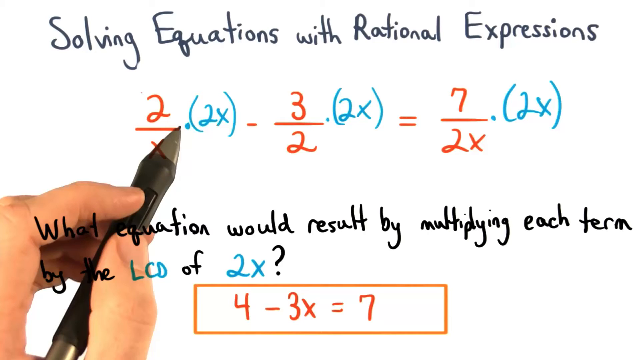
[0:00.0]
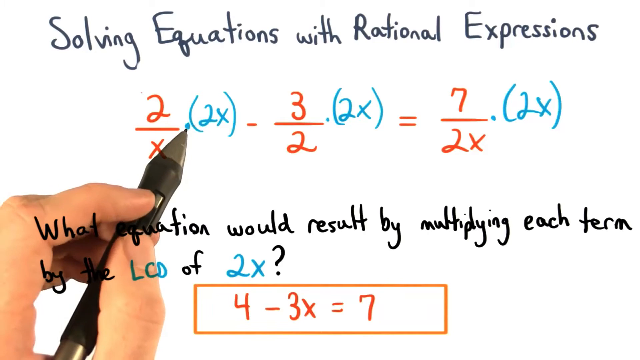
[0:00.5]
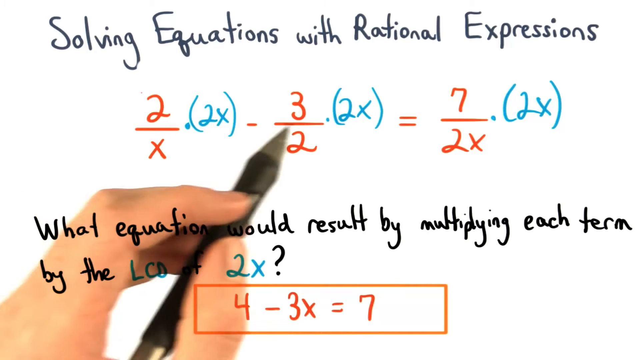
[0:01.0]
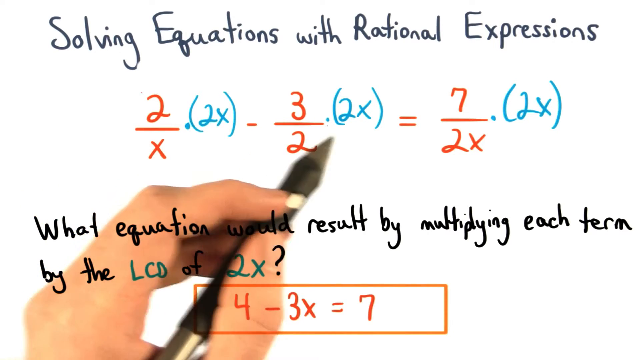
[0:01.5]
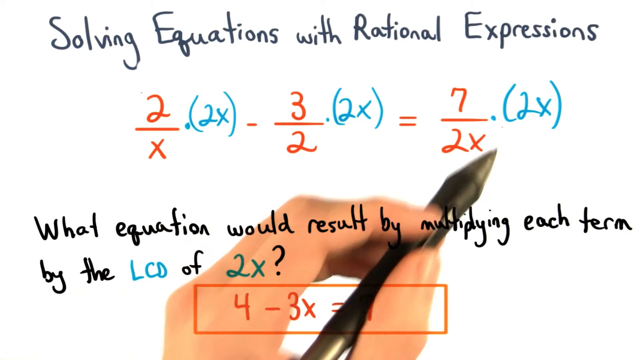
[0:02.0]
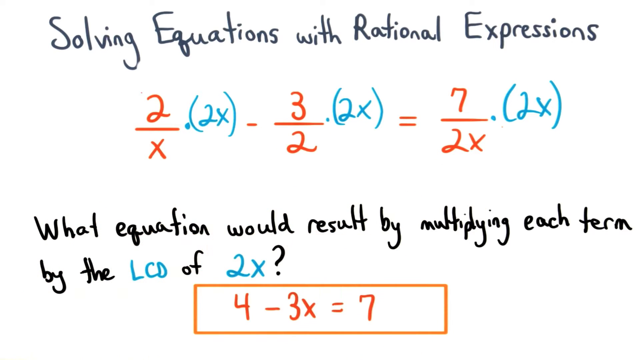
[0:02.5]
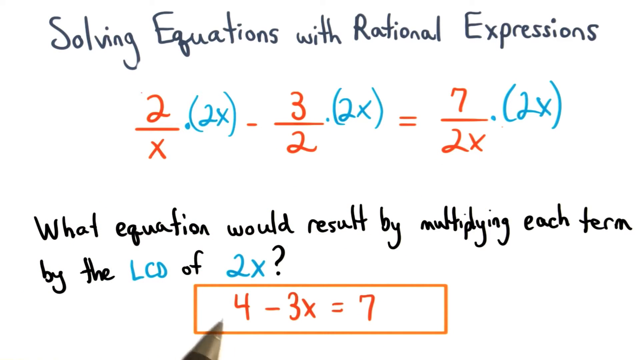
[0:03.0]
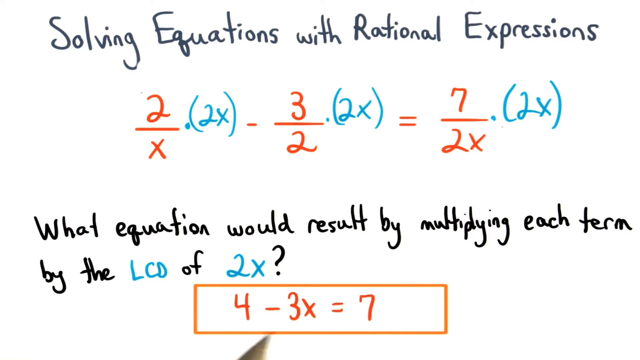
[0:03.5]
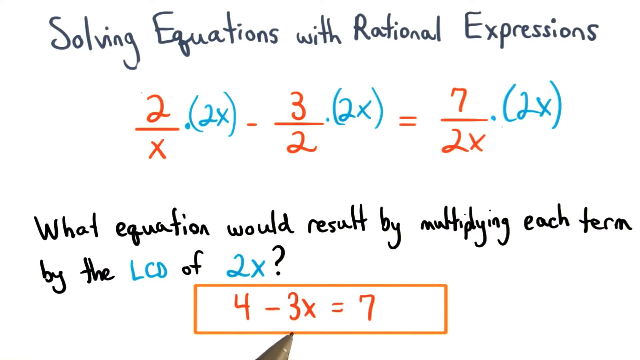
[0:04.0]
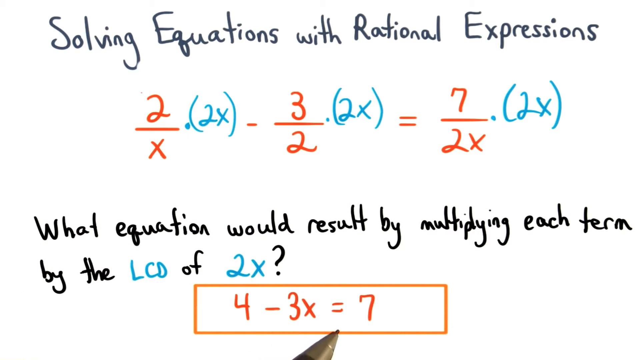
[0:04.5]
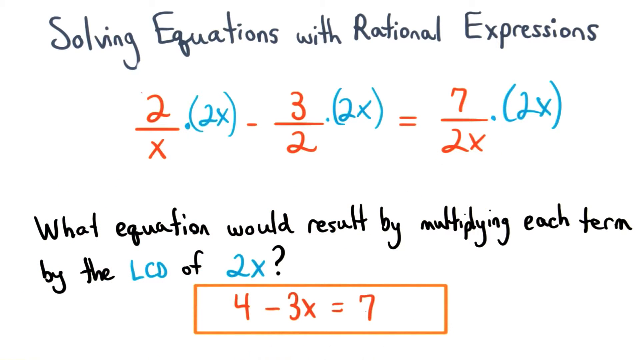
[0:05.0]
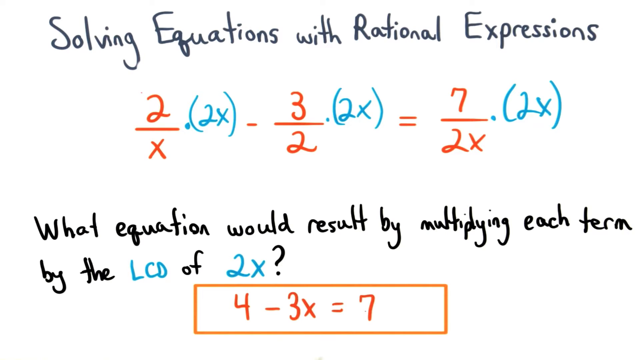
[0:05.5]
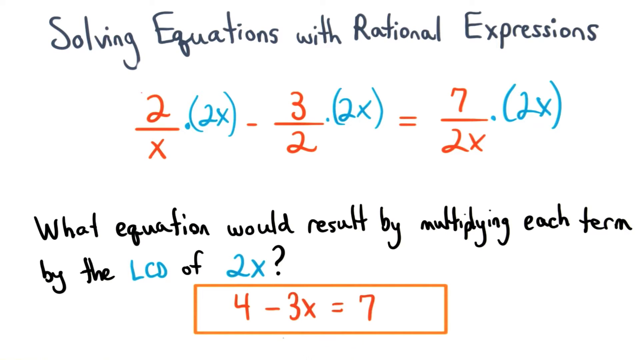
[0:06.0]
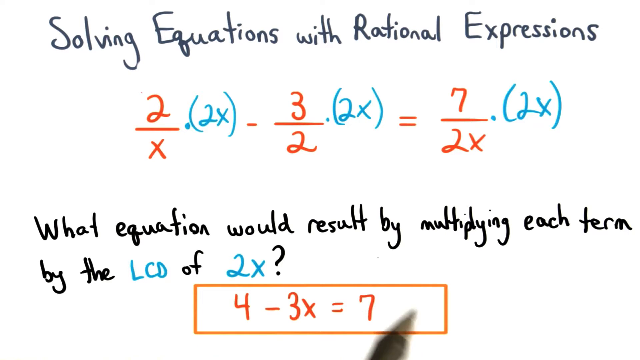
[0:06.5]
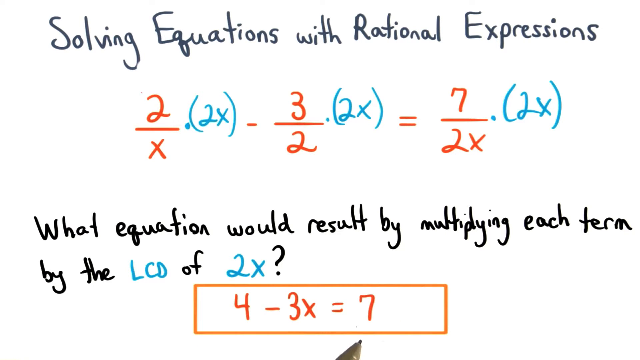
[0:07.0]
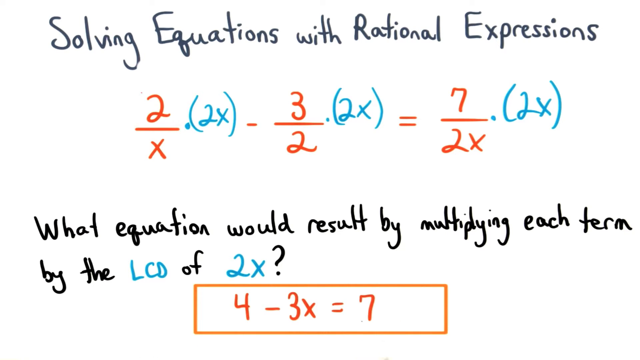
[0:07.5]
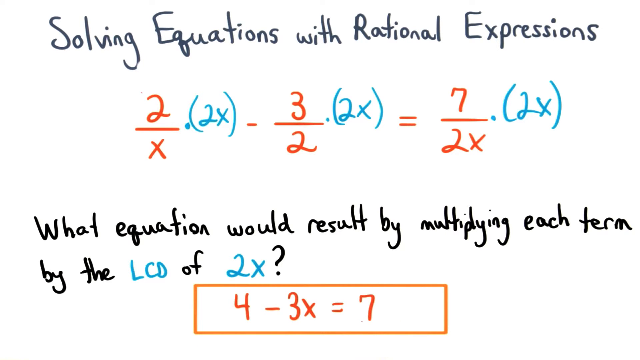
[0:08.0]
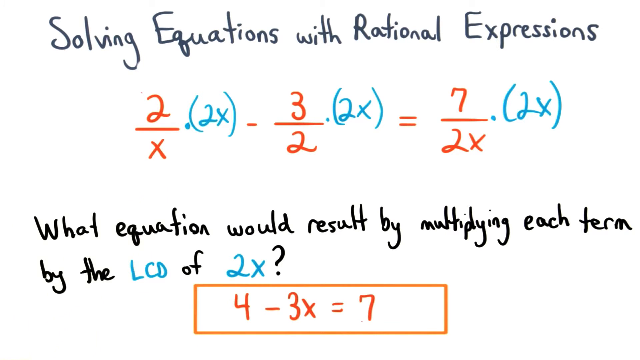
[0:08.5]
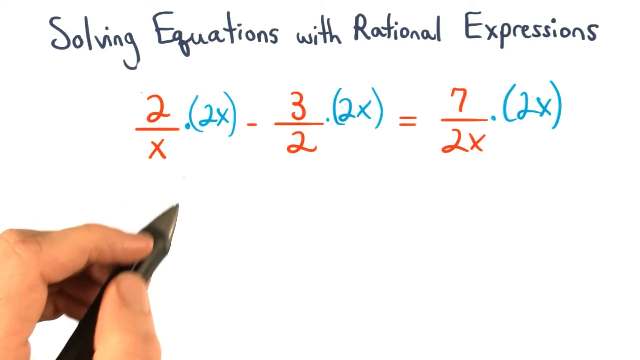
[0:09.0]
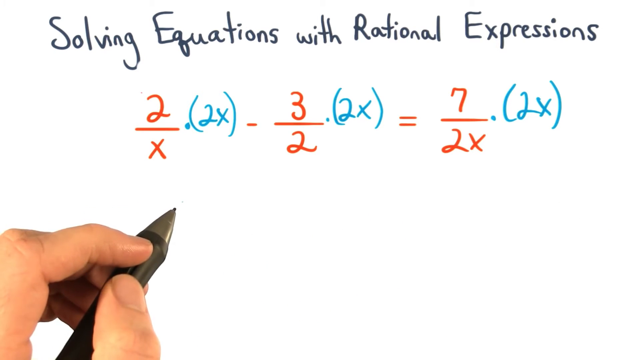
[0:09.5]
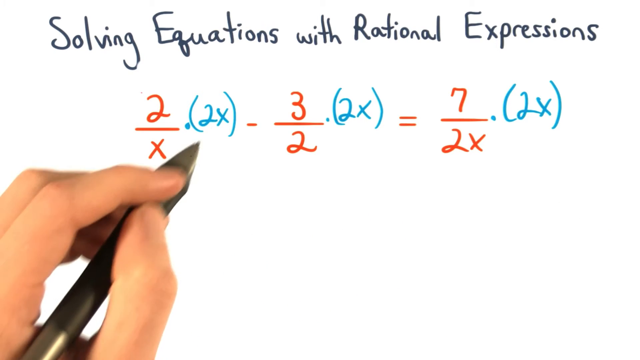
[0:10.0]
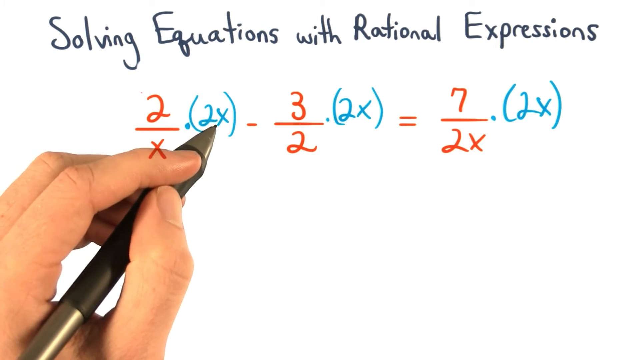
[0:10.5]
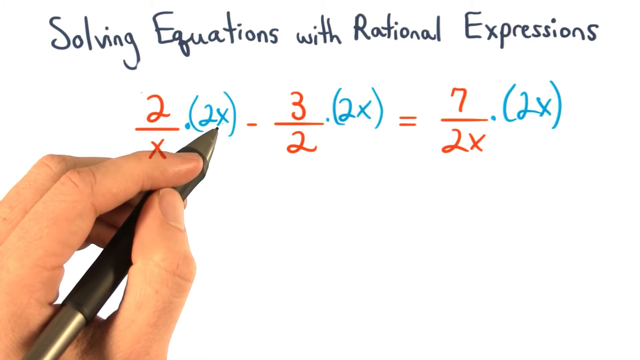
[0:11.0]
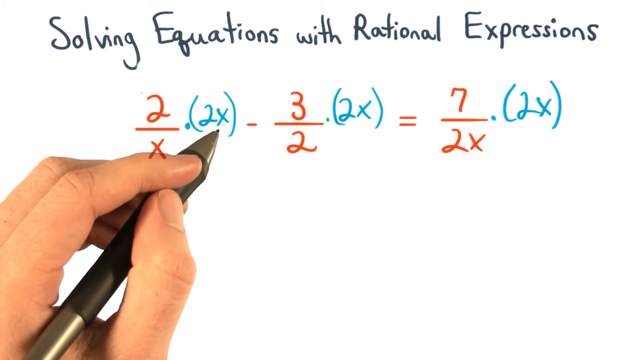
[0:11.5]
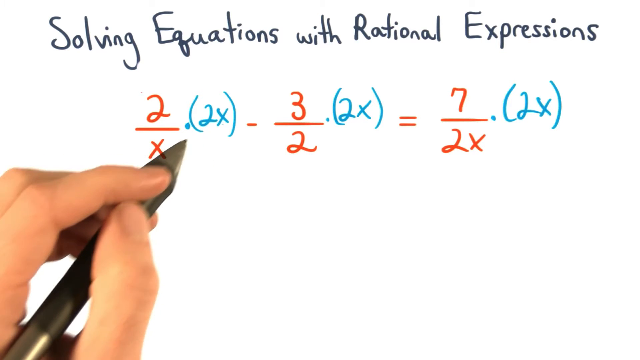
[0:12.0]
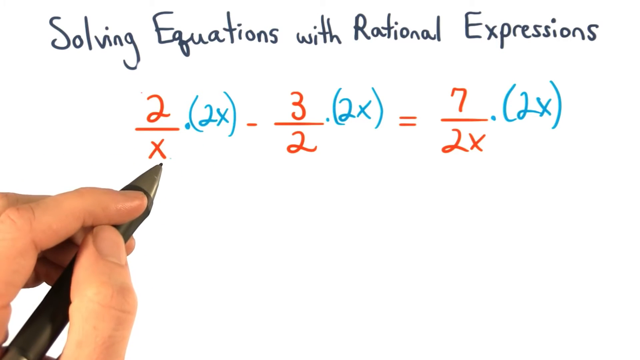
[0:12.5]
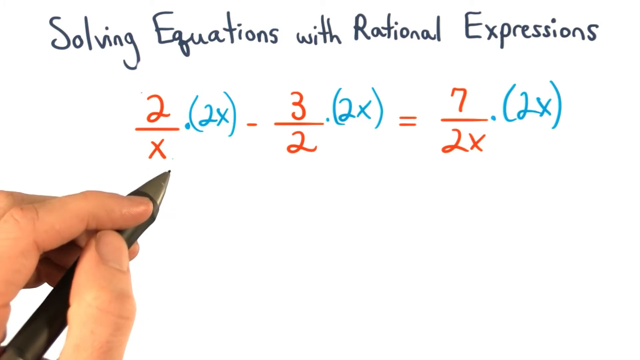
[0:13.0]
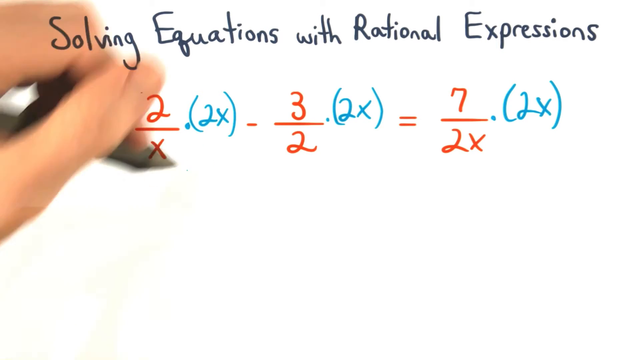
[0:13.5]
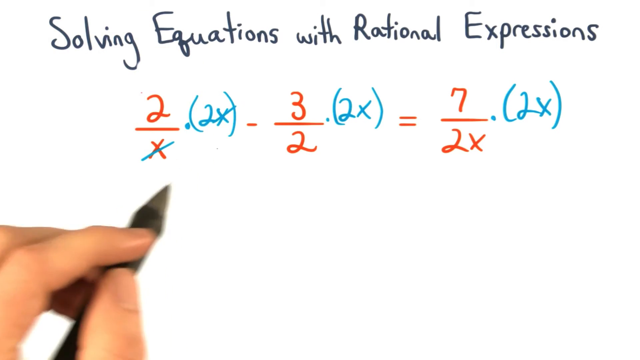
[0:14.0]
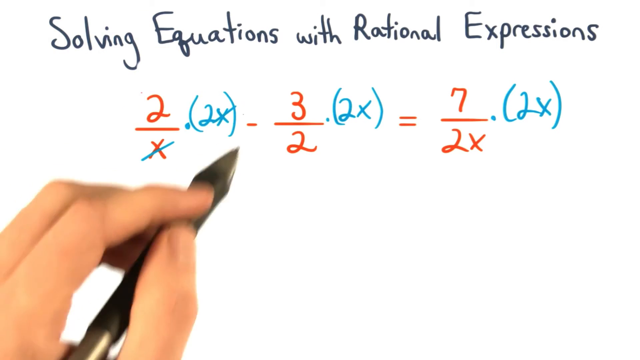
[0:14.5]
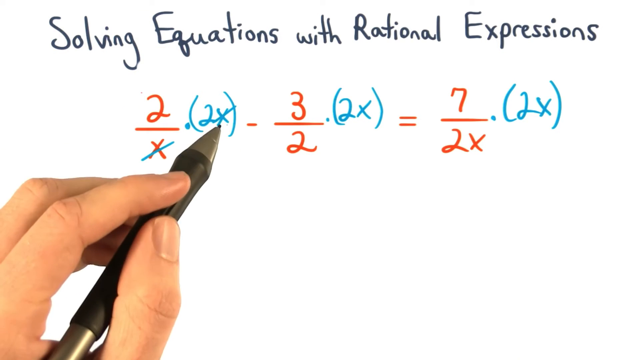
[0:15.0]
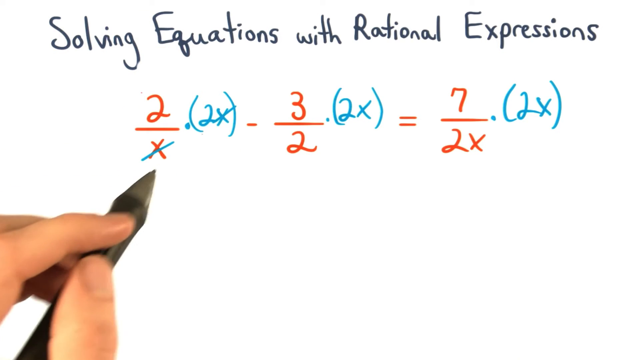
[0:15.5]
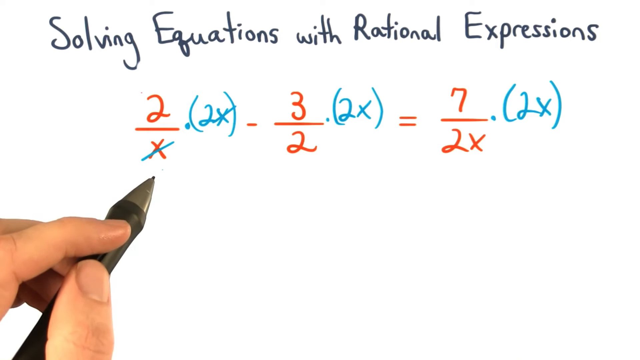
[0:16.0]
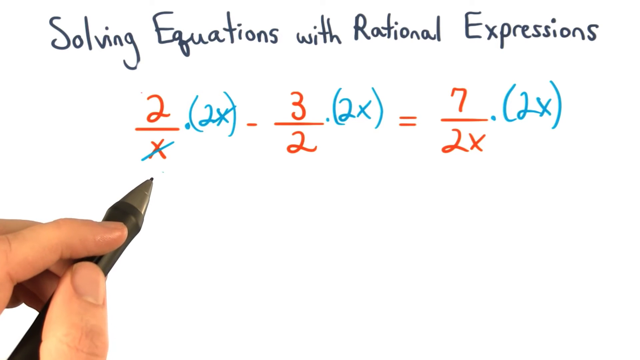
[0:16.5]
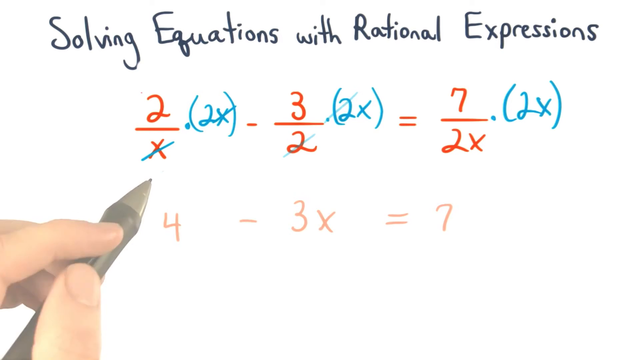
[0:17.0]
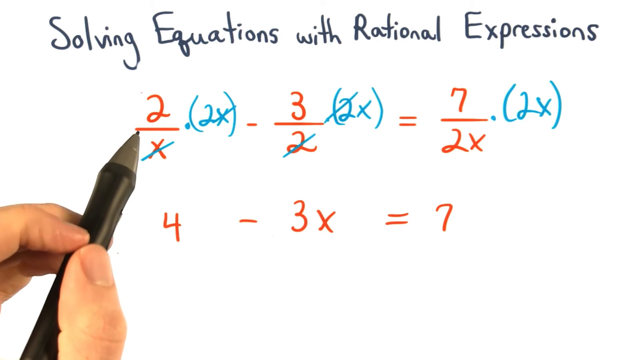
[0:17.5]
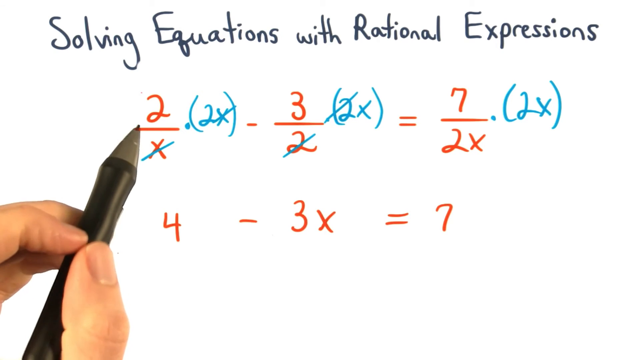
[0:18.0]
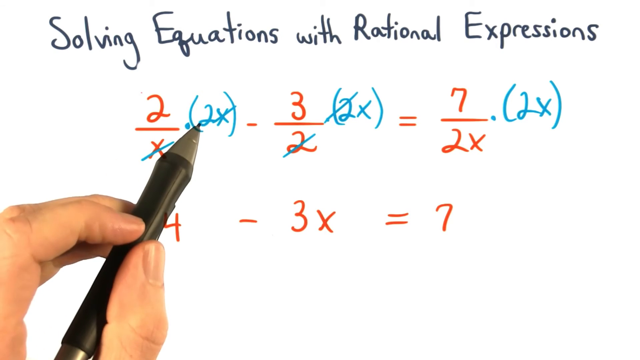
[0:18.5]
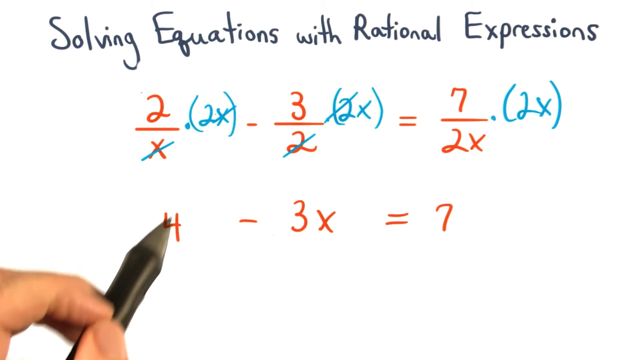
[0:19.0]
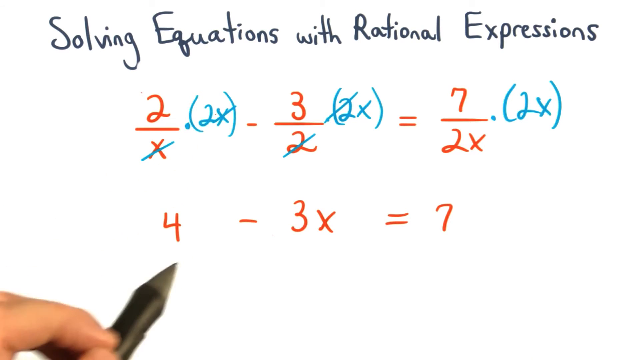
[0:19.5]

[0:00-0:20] The video is about solving equations with rational expressions. The question "What equation would result by multiplying each term by the LCD of 2x?" is shown. Two examples that have already been solved are given, one in orange and one in blue, along with their answers, and another equation is highlighted in orange. The questions are written in black, and orange and blue shading is used to explain the equations. A man explains step by step with a black pen how to solve the question, solving the expression and getting the answer.